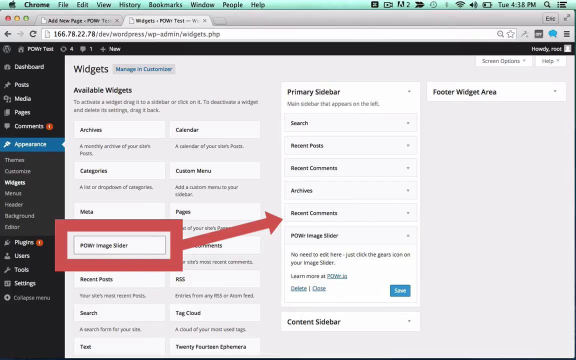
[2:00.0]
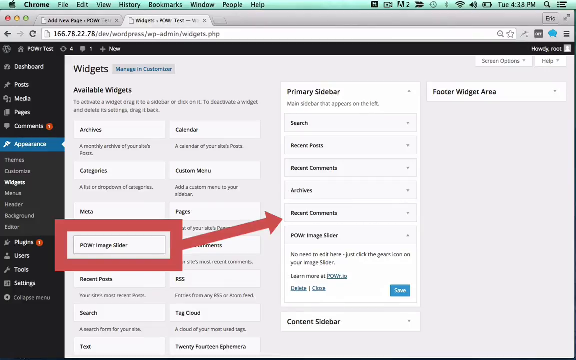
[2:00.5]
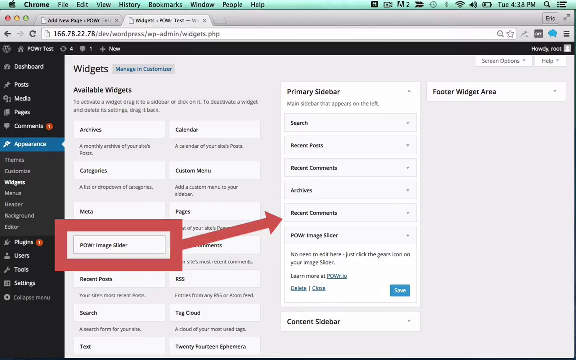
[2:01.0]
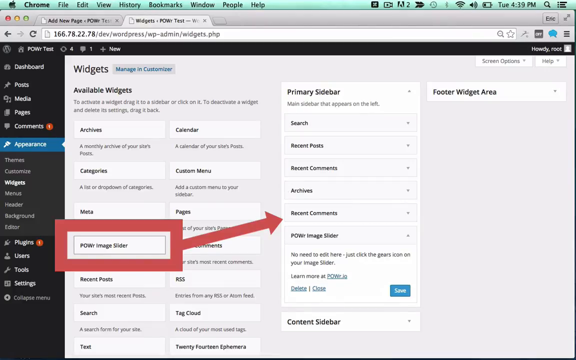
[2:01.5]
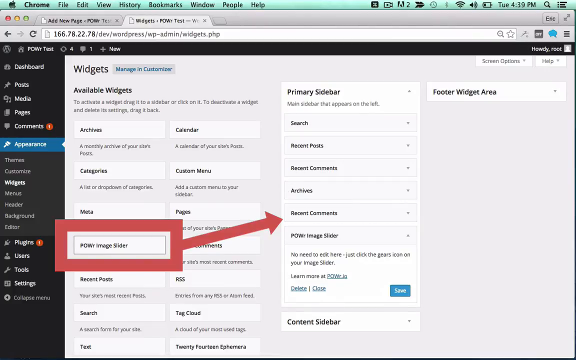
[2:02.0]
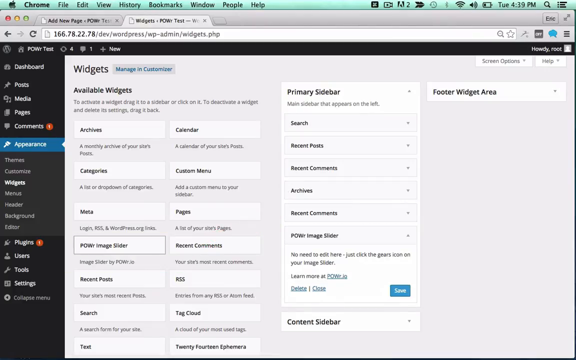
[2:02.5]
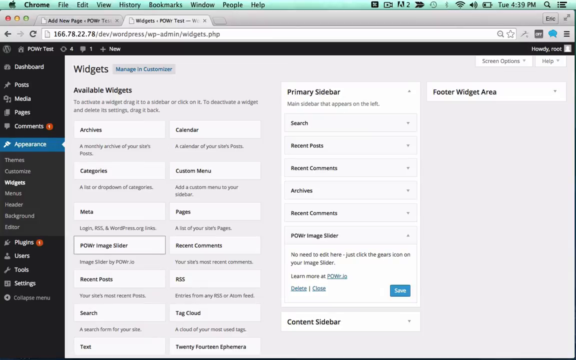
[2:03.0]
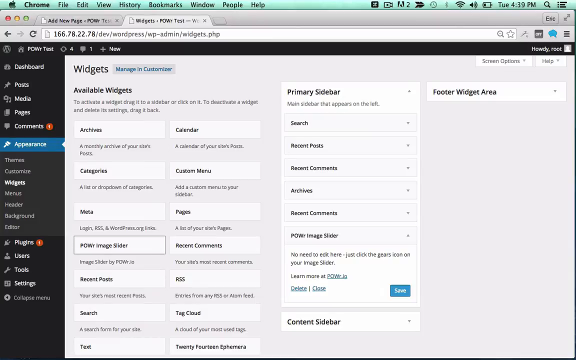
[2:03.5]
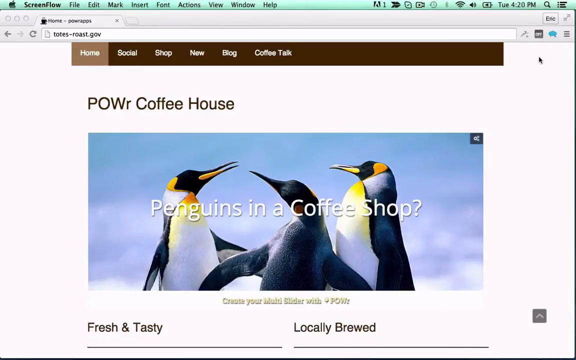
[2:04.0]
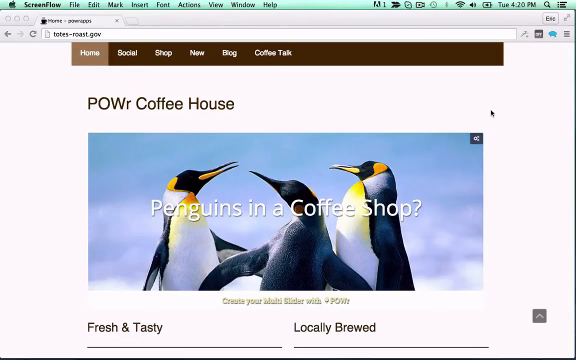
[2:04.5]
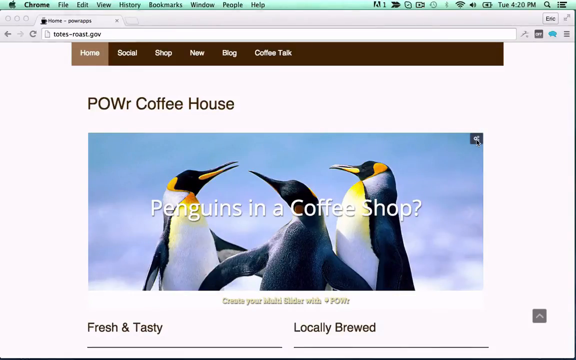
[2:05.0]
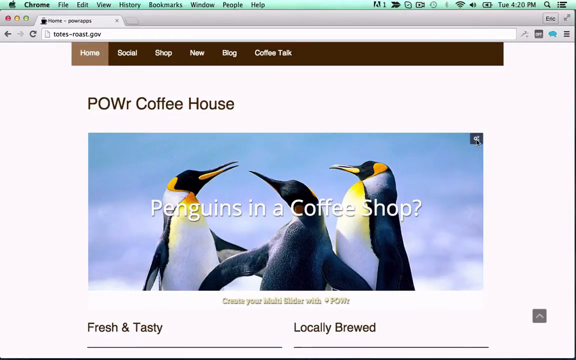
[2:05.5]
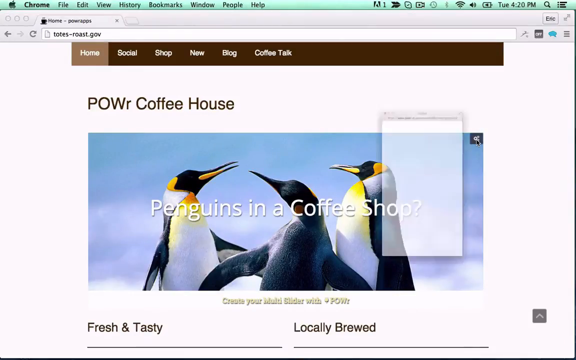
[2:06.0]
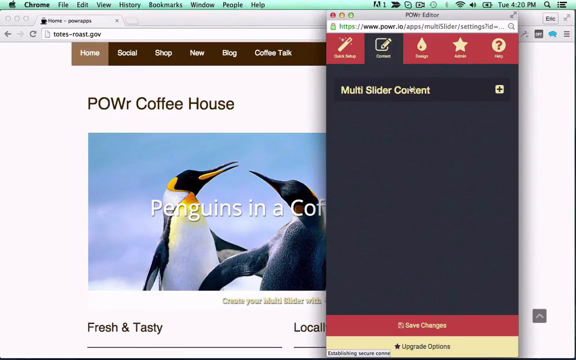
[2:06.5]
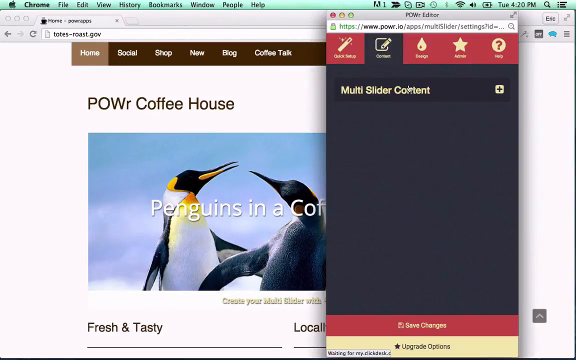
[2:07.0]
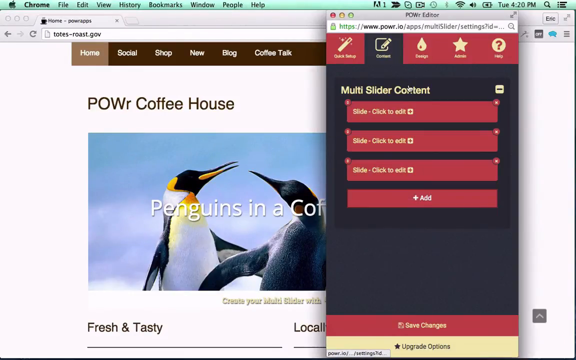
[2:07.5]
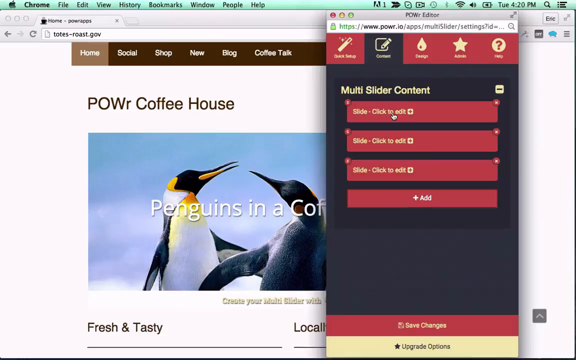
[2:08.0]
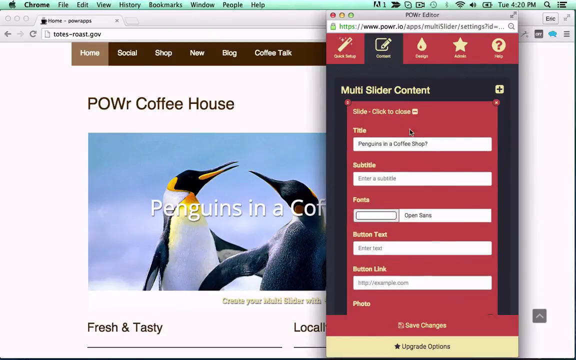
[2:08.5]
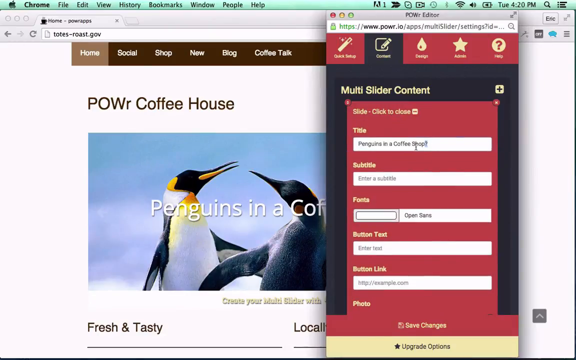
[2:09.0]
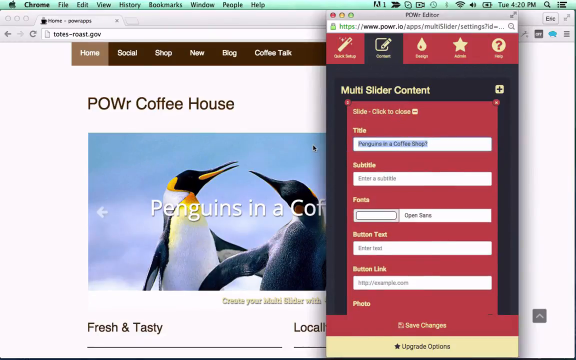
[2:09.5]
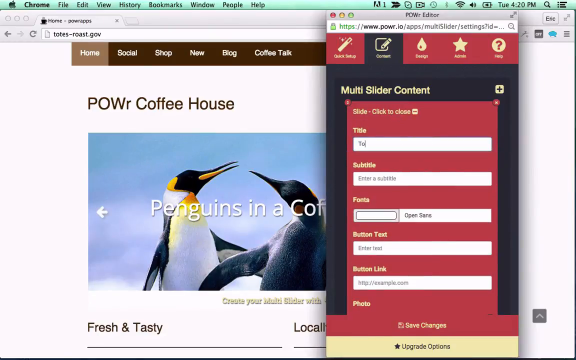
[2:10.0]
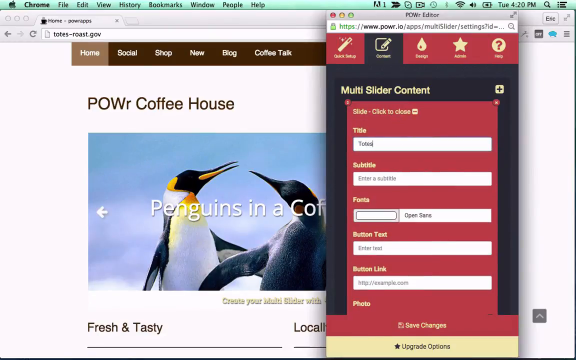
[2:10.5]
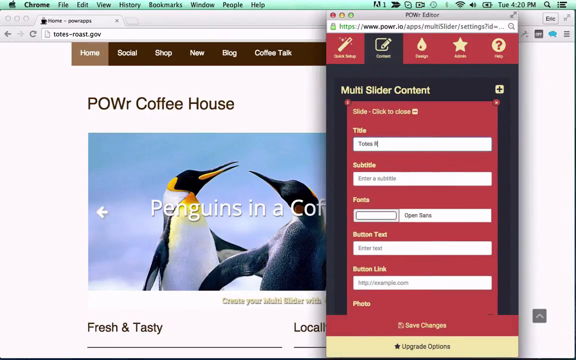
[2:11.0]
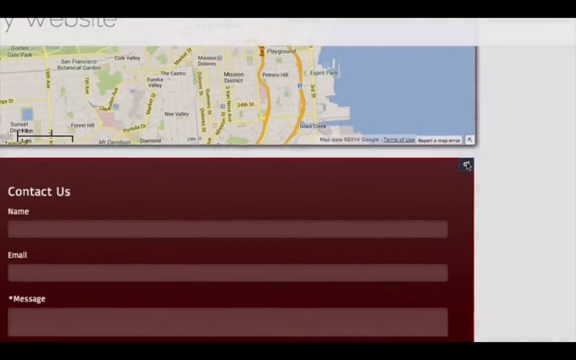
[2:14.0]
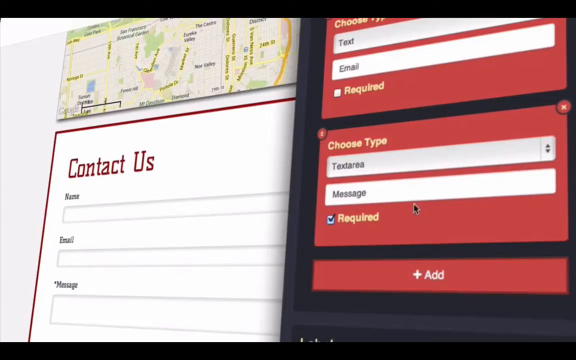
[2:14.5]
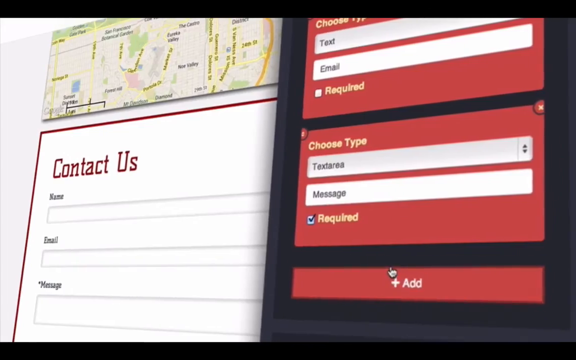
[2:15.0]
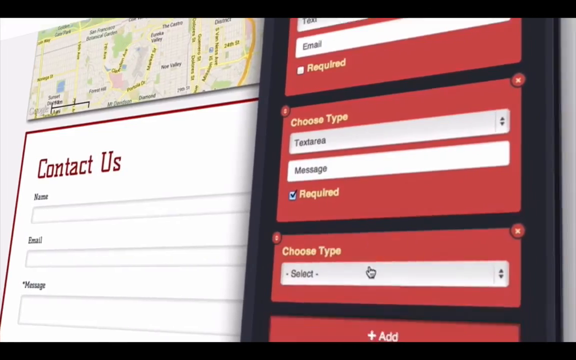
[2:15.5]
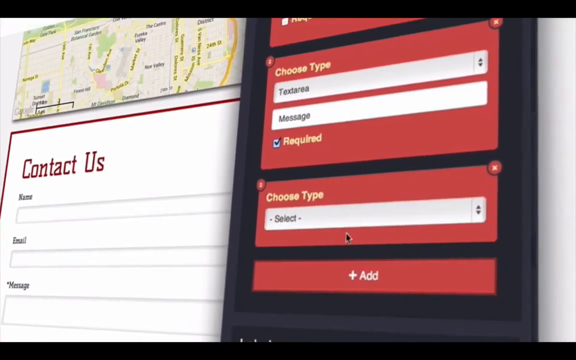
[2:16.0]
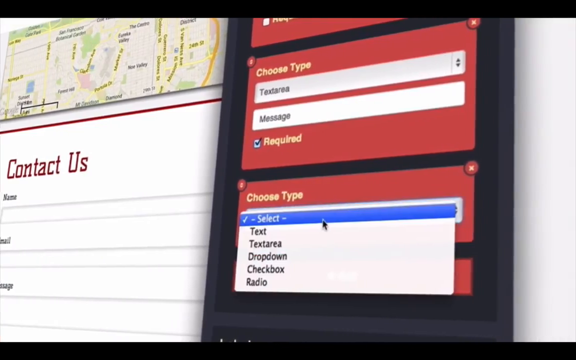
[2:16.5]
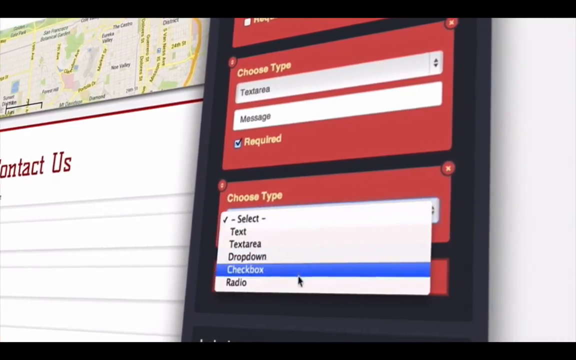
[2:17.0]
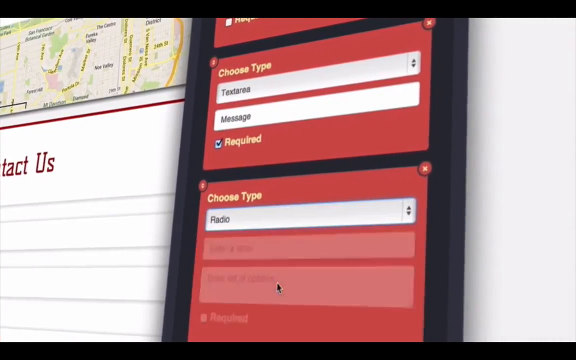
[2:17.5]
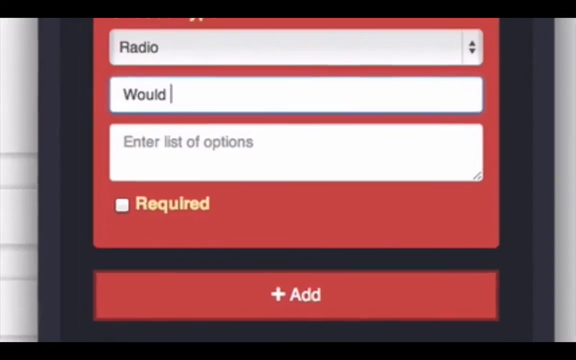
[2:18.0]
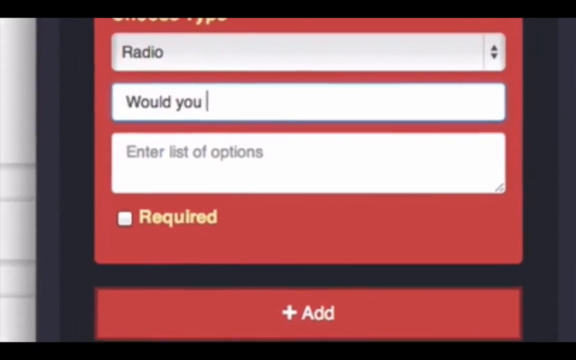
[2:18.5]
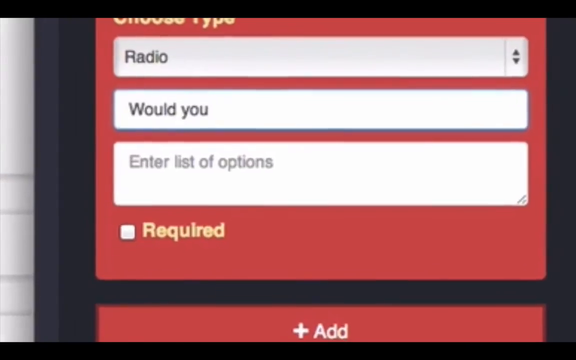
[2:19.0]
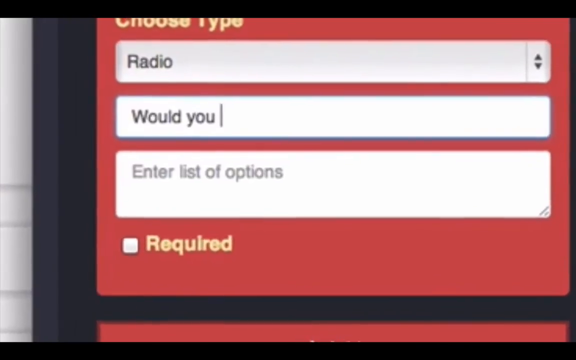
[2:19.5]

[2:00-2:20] Without clicking recent comments, he apparently closes that page and returns to his Power Coffee House website with the penguins, where he opens the POWr editor. Under content there is a multi-slider content page, and under one of the slides he changes the title to "Toast Roast". Suddenly the screen turns black and a cinematic view of the website appears, showing the screen at an angle. The camera kind of pans over and shows another angle of the POWr editor, zooming in on one of the slide cards. Briefly, "POWr Disco" appears.